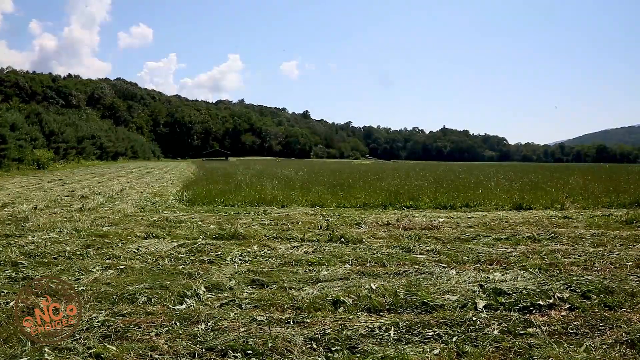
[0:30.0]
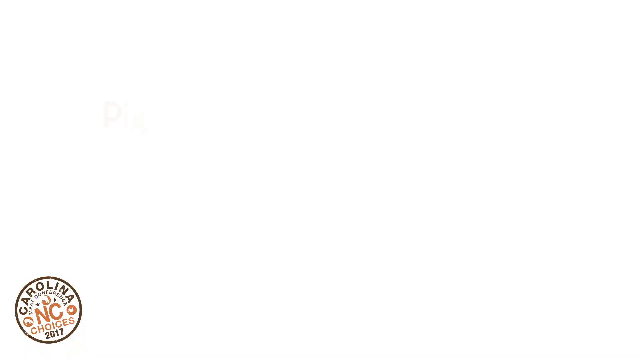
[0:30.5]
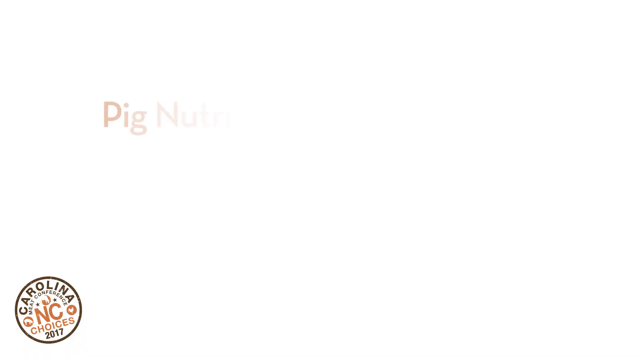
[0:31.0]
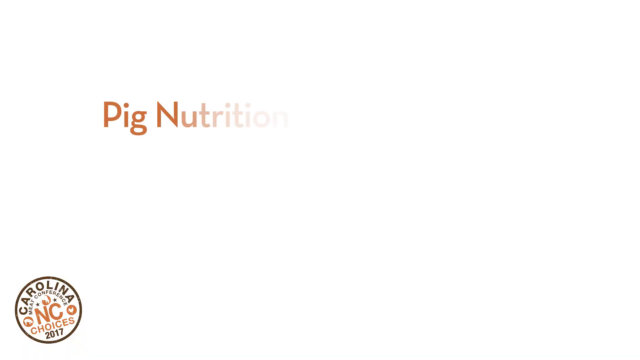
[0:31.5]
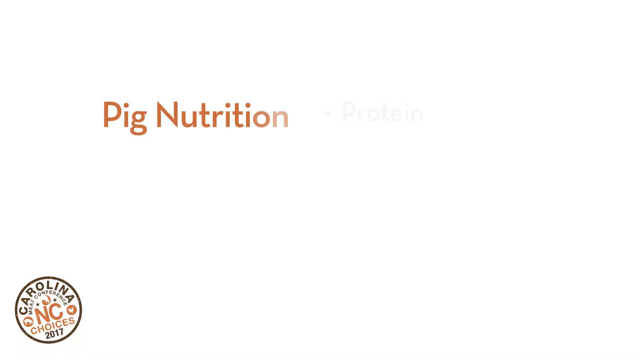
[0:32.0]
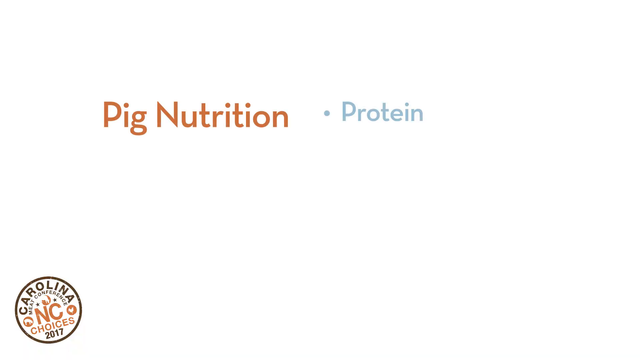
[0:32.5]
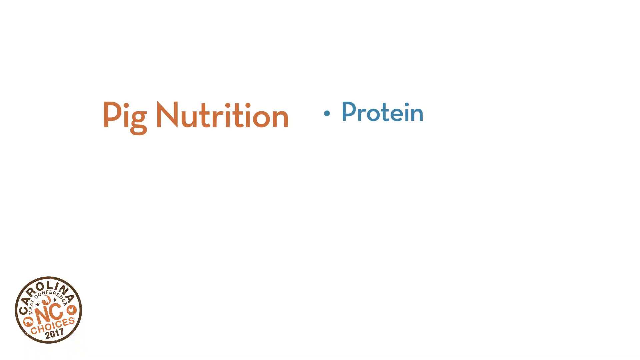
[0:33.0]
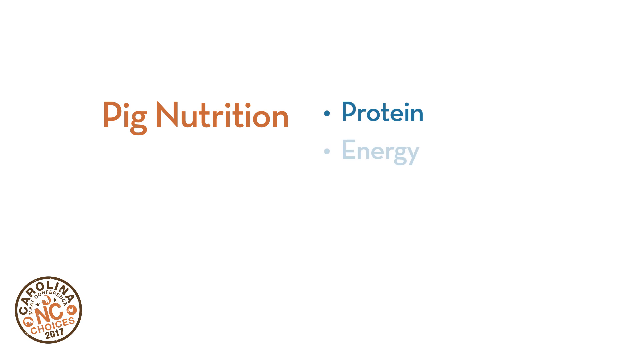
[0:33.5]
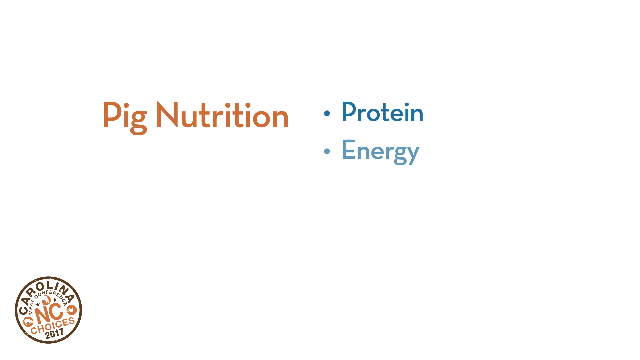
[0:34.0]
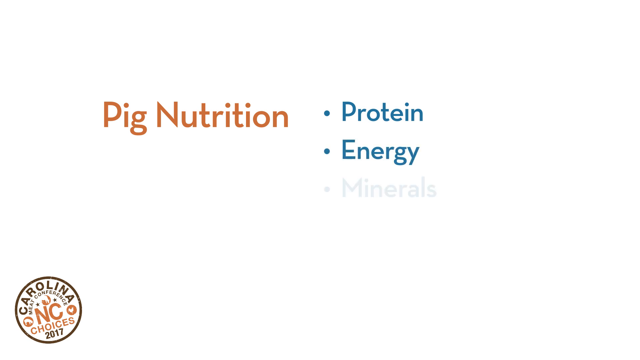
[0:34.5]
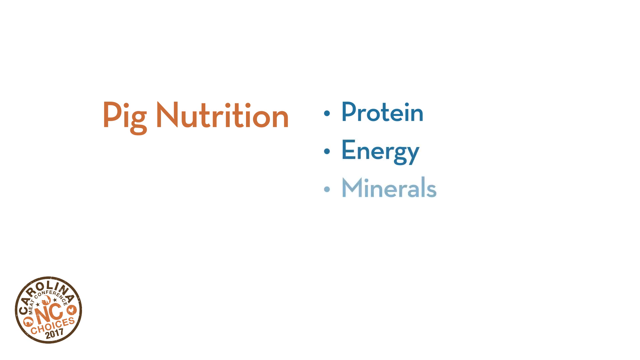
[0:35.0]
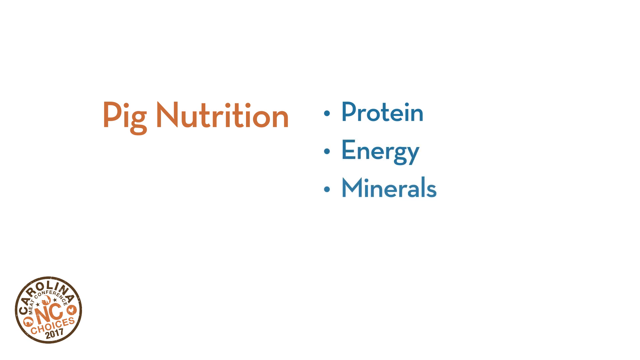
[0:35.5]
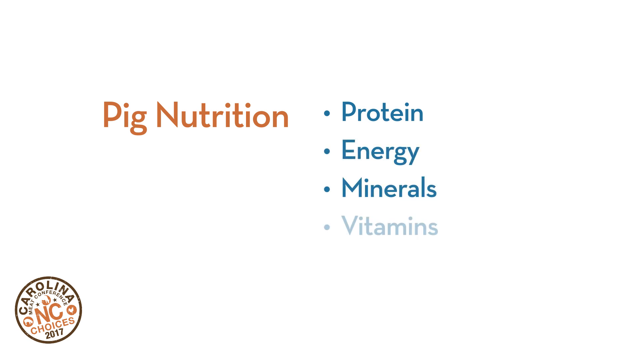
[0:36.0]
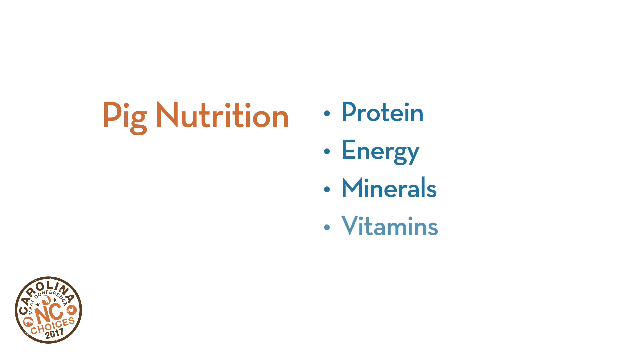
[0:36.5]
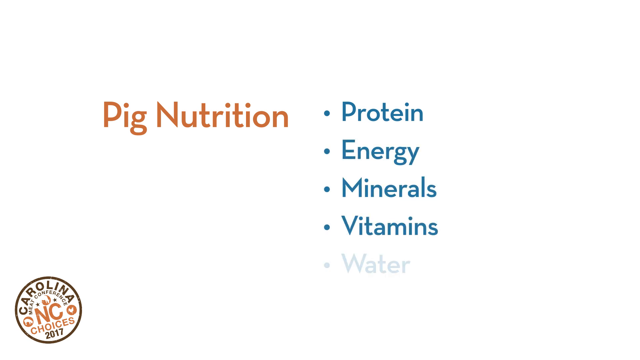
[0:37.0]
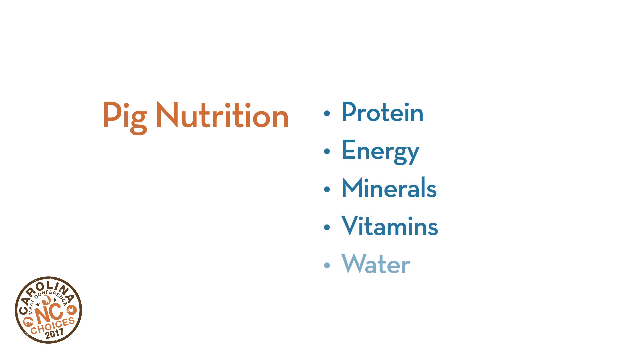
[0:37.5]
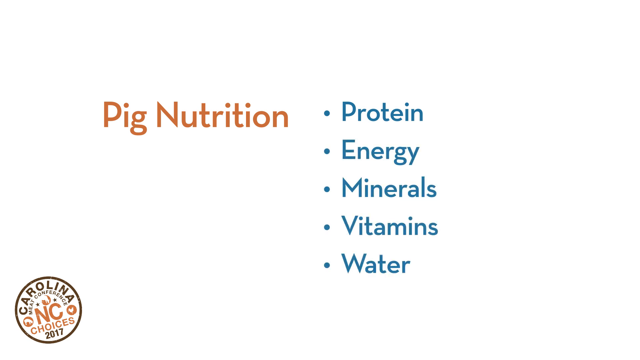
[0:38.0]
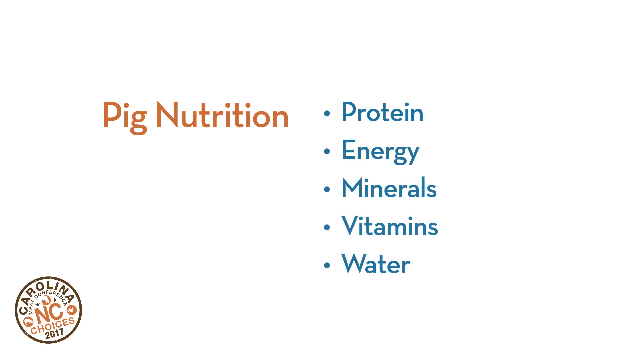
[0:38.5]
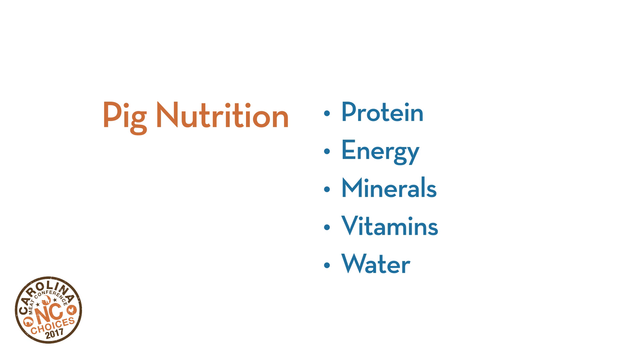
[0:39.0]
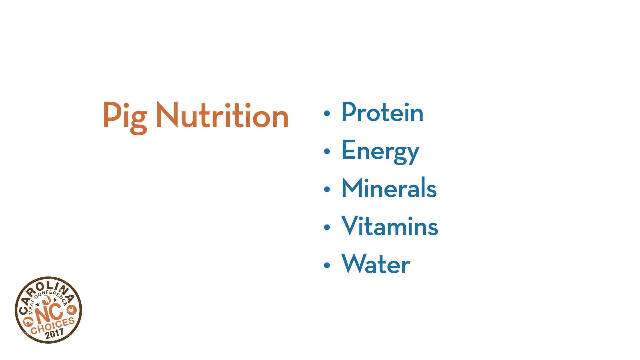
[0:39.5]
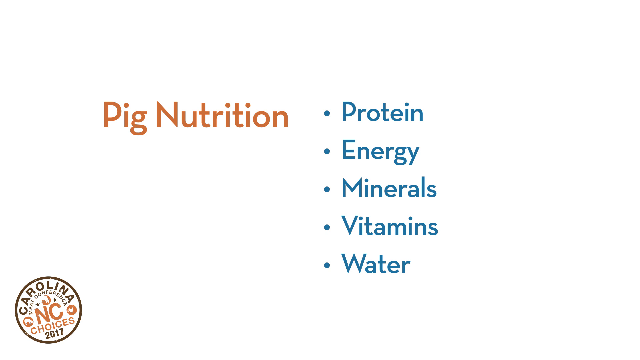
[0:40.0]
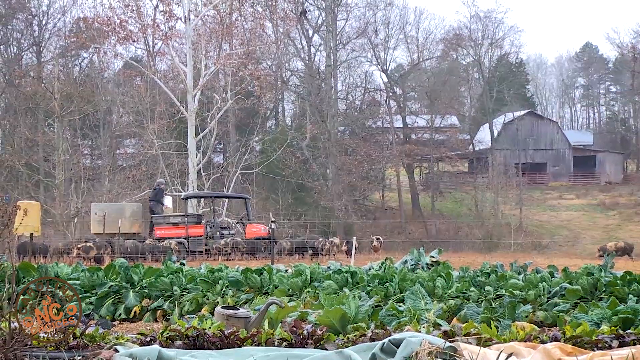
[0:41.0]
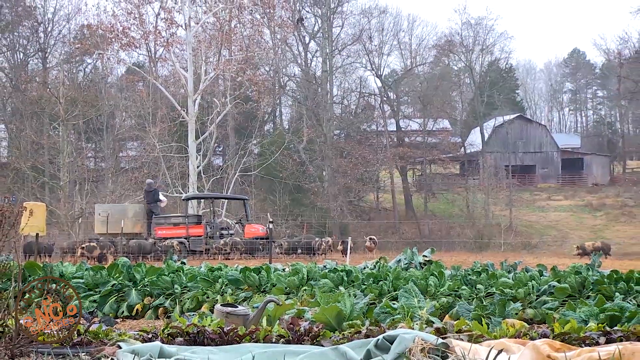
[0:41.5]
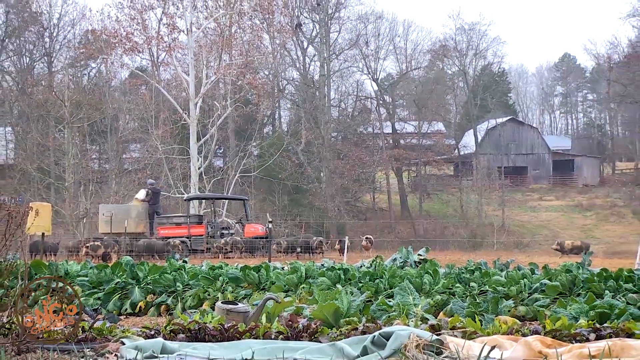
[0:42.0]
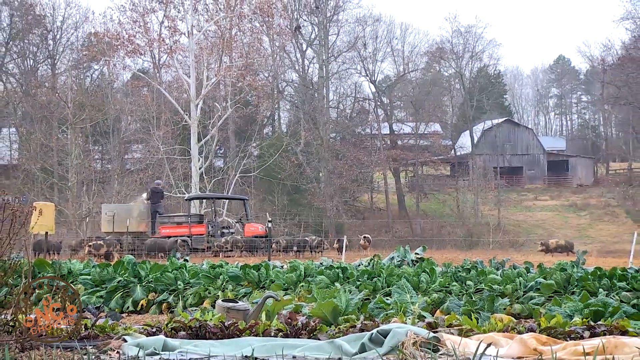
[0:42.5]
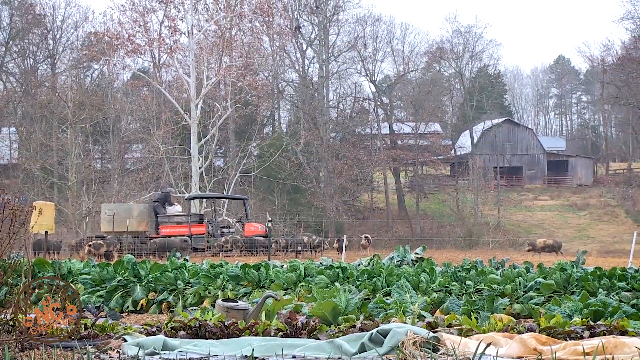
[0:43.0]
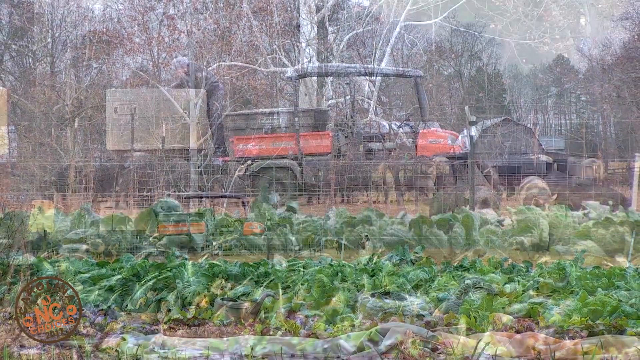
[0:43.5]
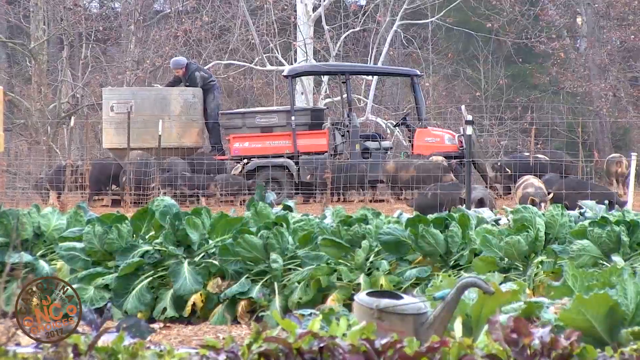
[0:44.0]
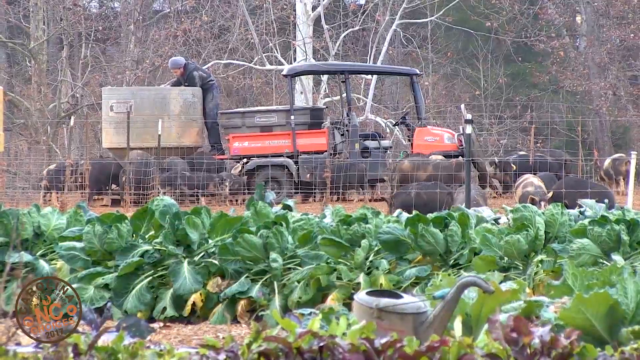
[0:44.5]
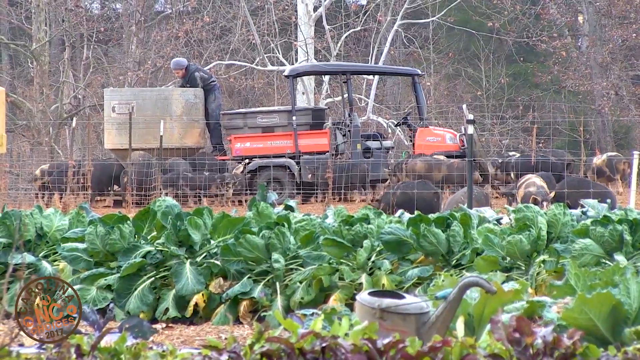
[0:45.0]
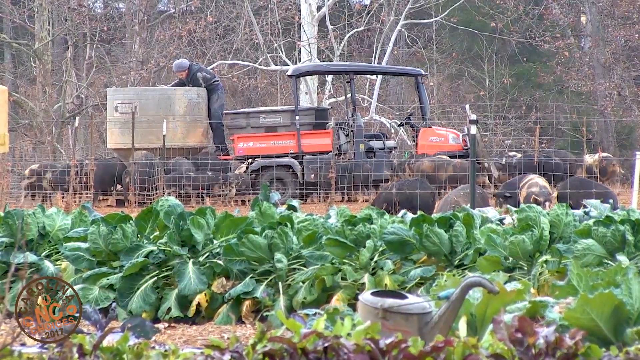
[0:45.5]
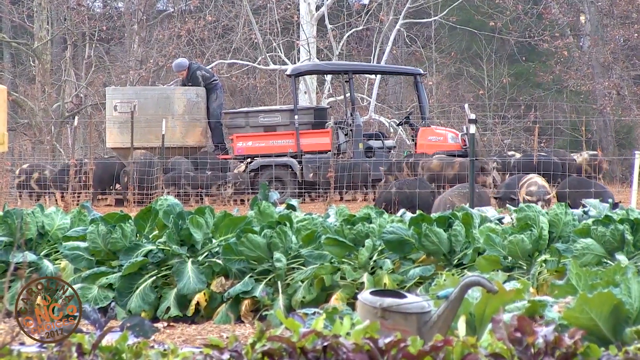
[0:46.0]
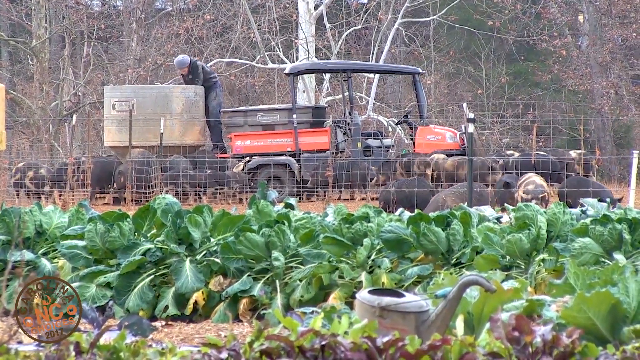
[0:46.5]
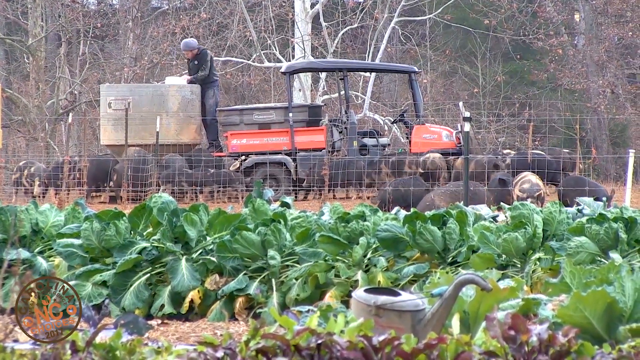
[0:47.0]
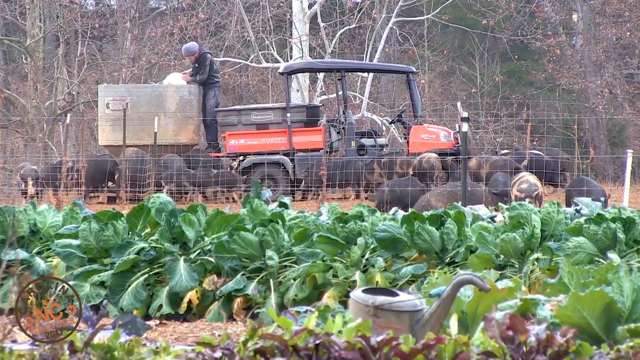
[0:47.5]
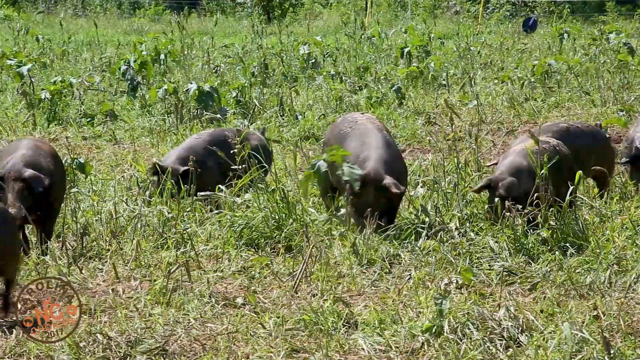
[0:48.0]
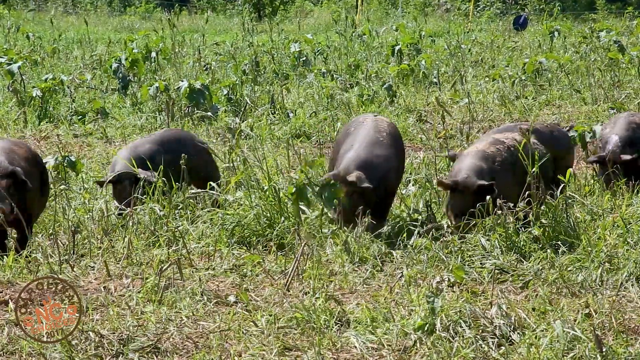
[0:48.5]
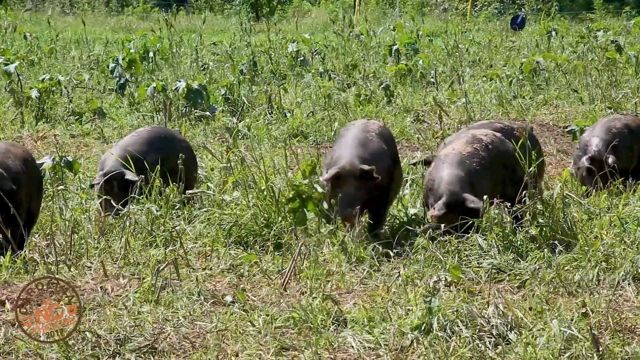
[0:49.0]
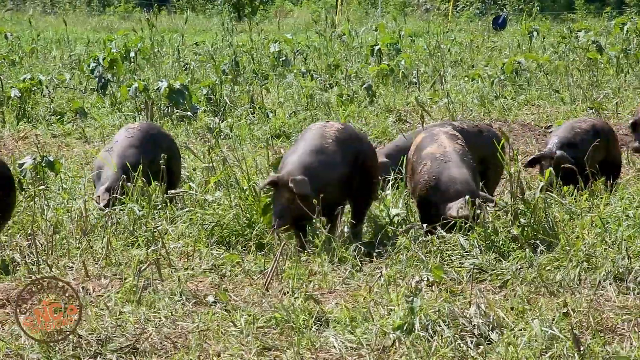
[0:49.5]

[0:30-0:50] The view looks out over several acres of field. In an L-shaped pattern, apparently a square, part of the field has been mowed down, maybe for hay, and in the middle is the unmowed part, which maybe comes up to calf height. It is very green and lush. Around it and in the background are a lot of trees about two stories high, also very lush. It is summer, with a bright blue sky, a few puffy clouds, and a hill on the right-hand side of the screen. It then transitions to another white background that says "pig nutrition" with a vertical bulleted list: "protein," "energy," "minerals," "vitamins," and "water." "Pig nutrition" is in orange and the list is in a medium blue. Next comes a shot of a fence in the middle of the screen, with a kind of lettuce-like crop in front of it. Beyond that is a tractor; a man is climbing the tractor, and a bunch of pigs and sows are kind of hanging around it.